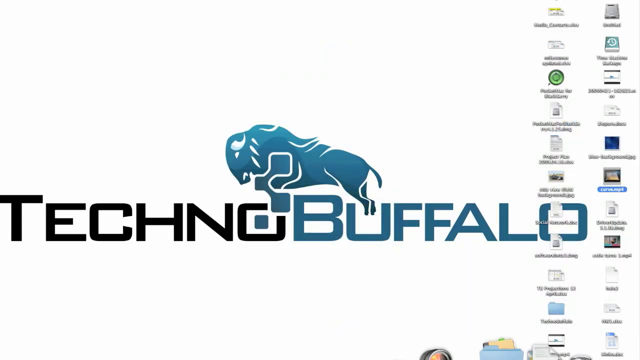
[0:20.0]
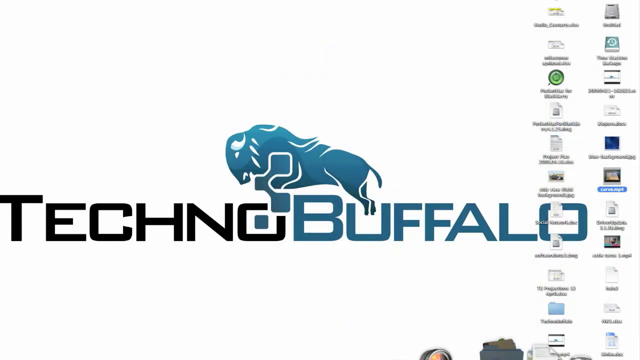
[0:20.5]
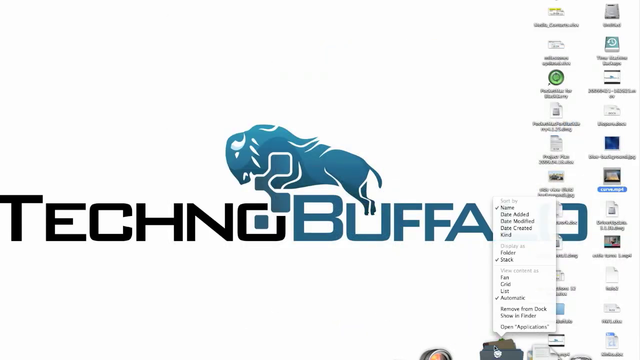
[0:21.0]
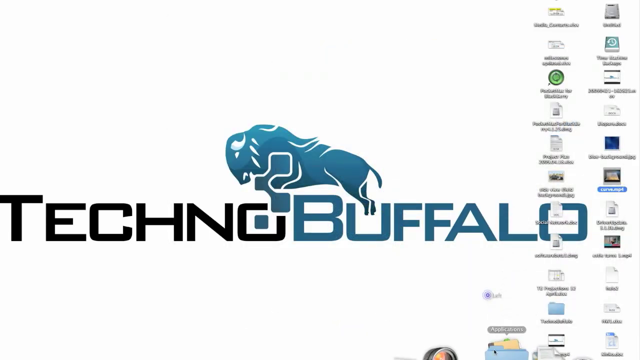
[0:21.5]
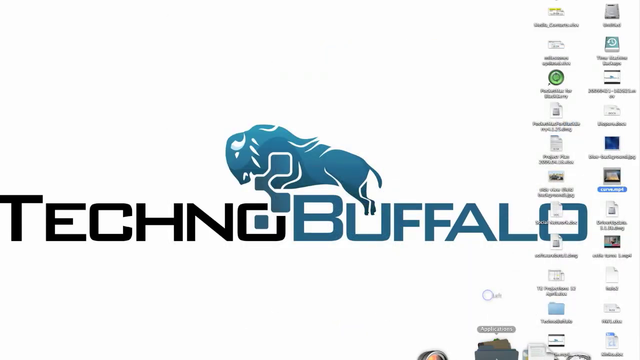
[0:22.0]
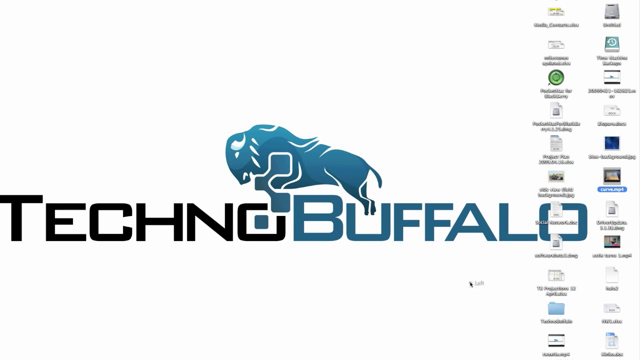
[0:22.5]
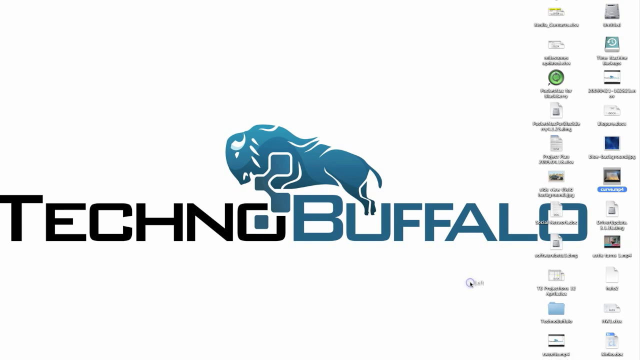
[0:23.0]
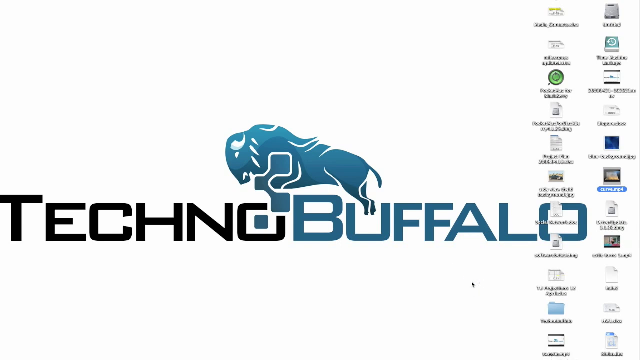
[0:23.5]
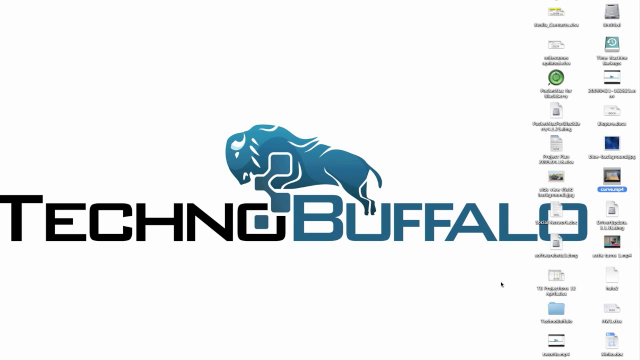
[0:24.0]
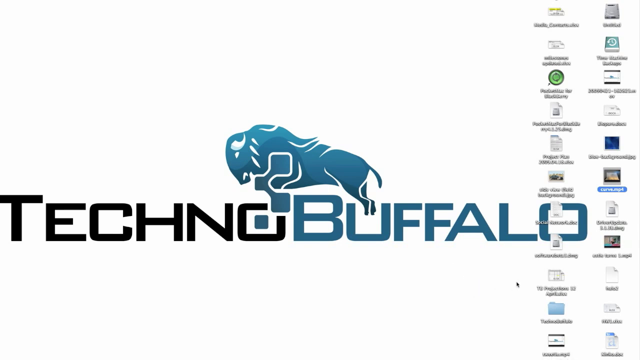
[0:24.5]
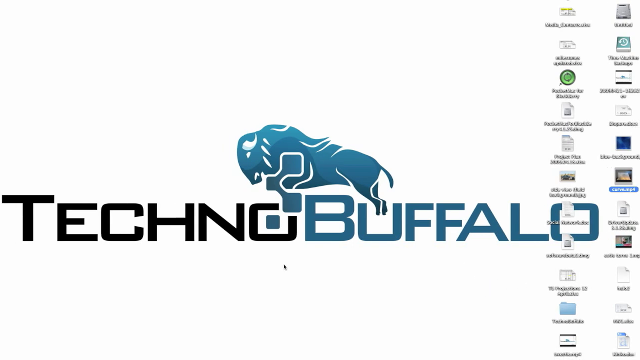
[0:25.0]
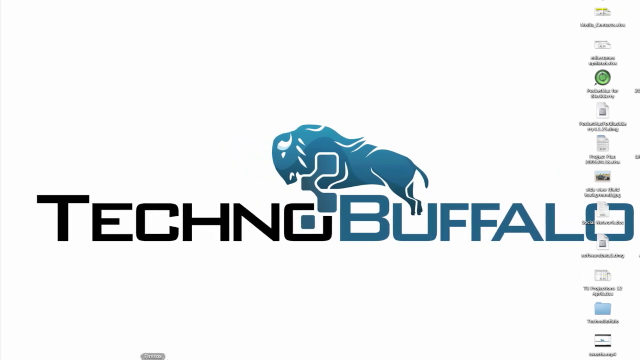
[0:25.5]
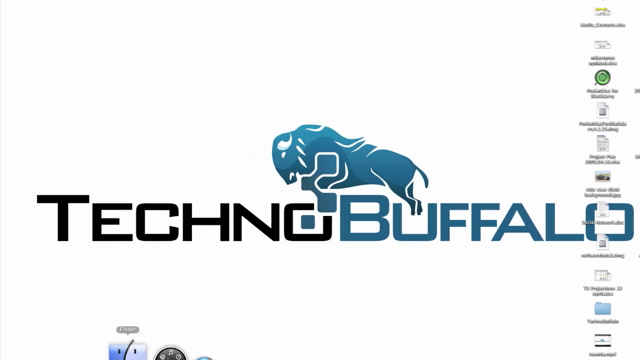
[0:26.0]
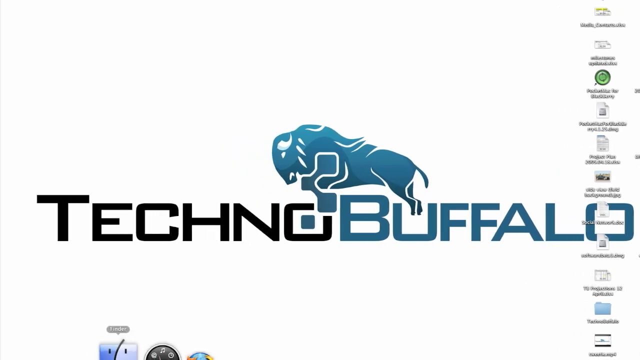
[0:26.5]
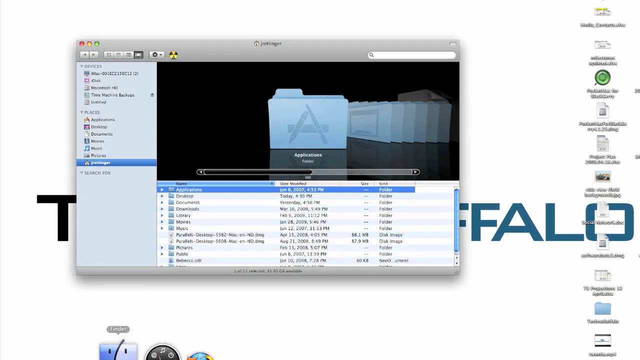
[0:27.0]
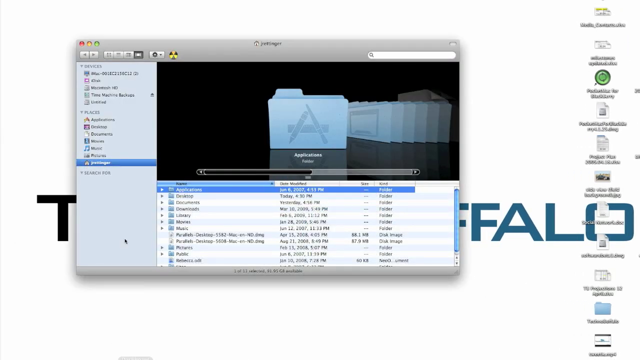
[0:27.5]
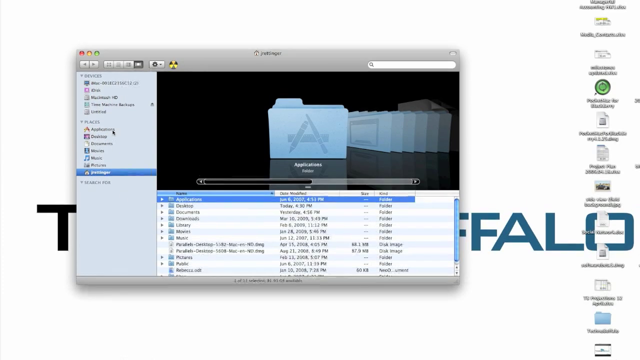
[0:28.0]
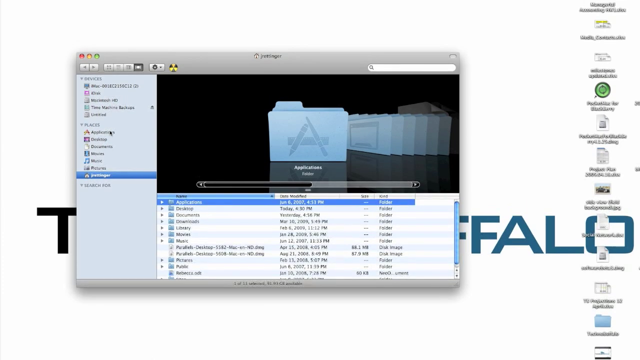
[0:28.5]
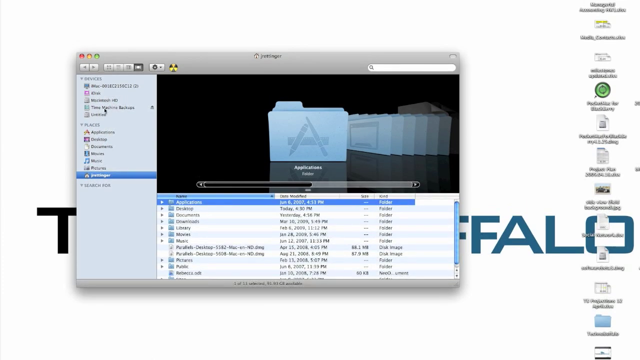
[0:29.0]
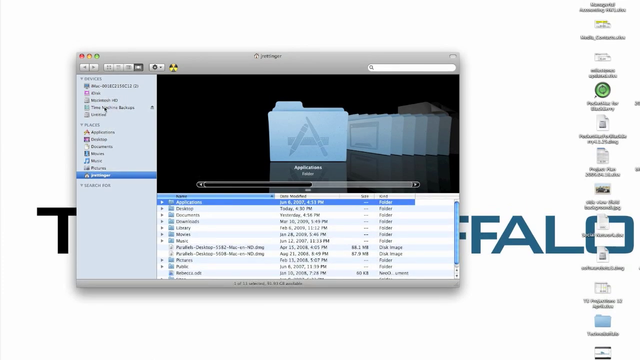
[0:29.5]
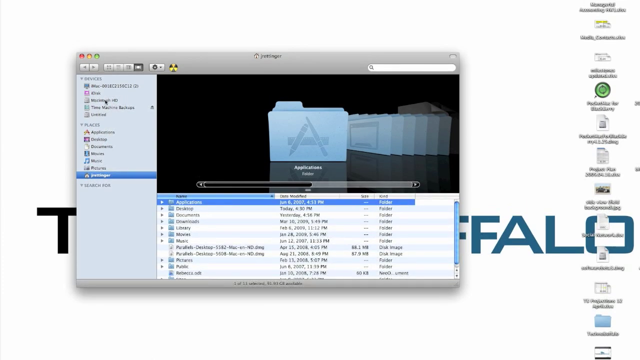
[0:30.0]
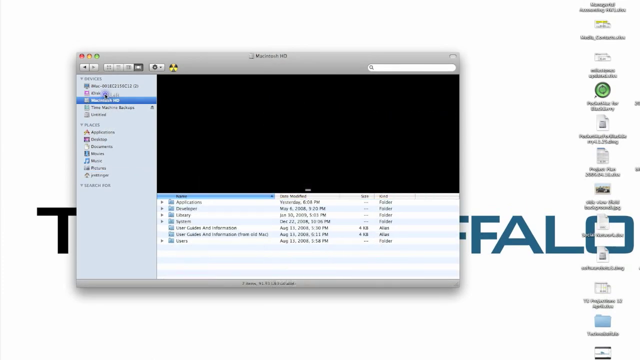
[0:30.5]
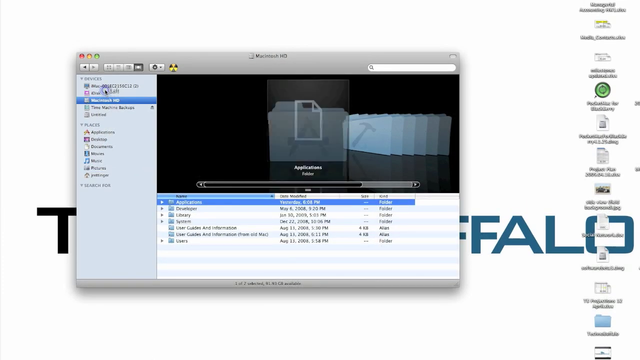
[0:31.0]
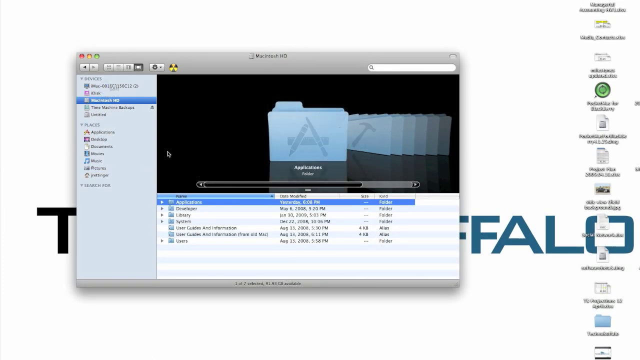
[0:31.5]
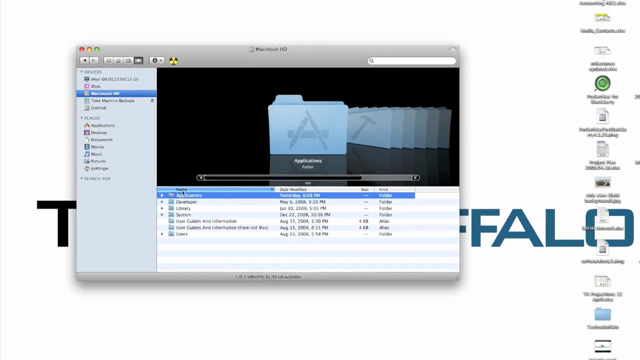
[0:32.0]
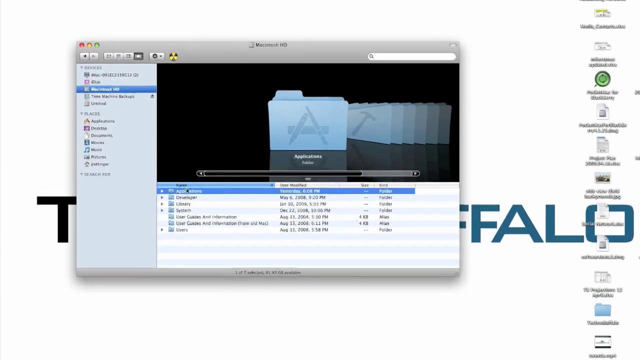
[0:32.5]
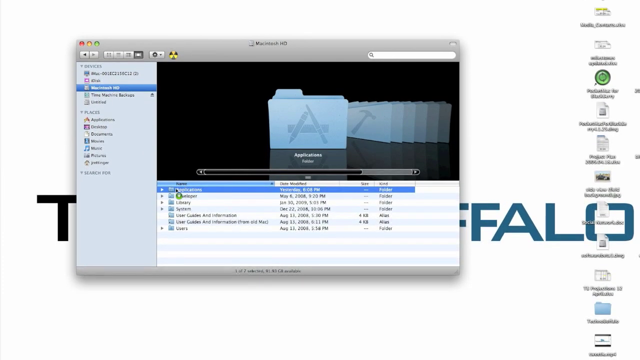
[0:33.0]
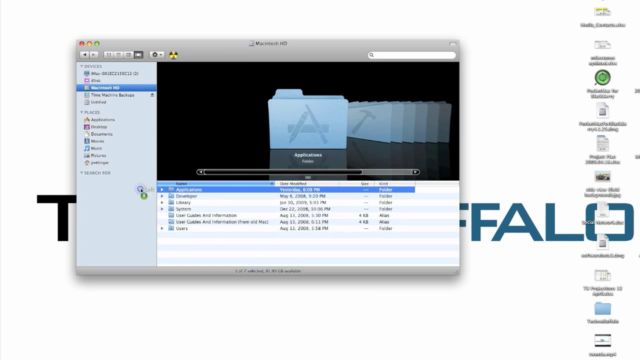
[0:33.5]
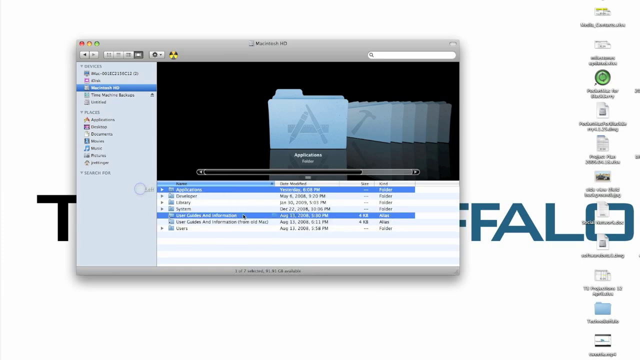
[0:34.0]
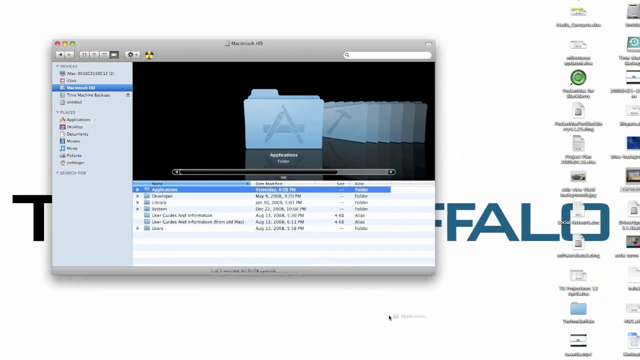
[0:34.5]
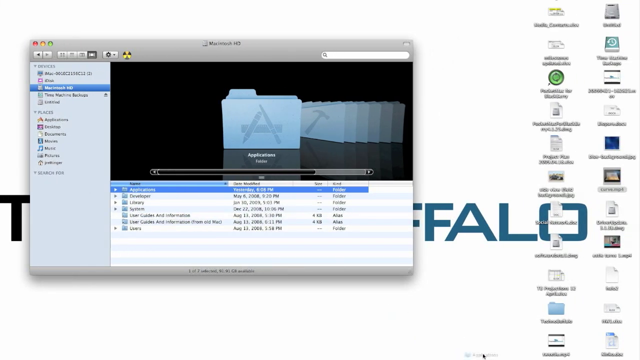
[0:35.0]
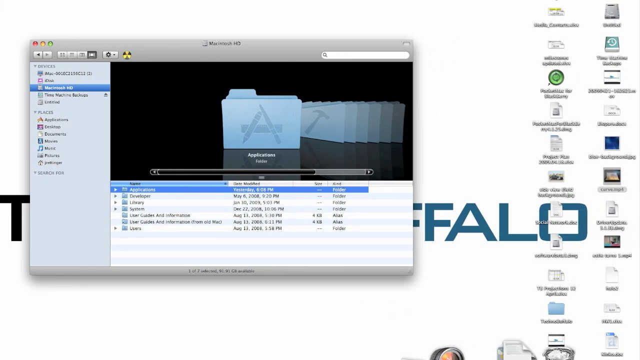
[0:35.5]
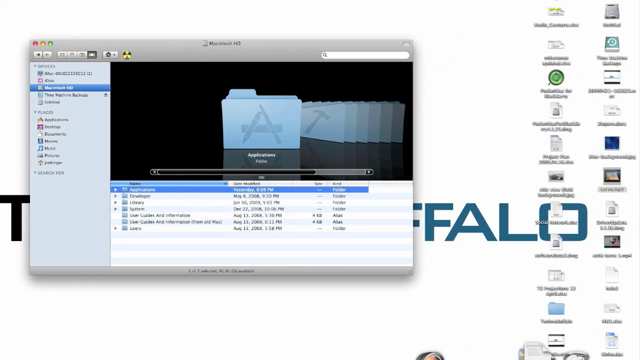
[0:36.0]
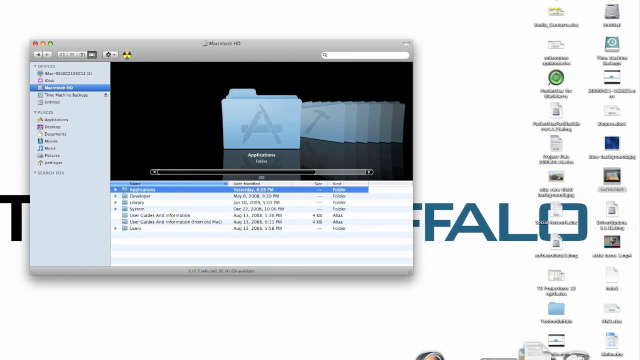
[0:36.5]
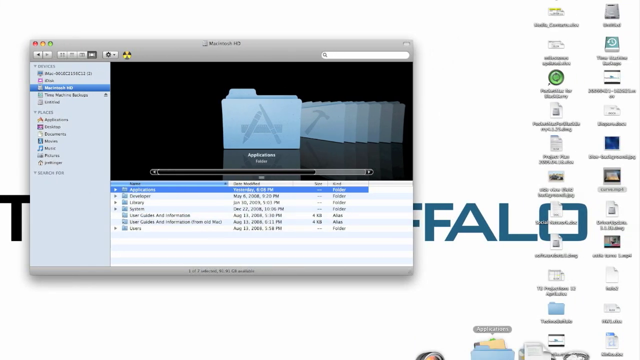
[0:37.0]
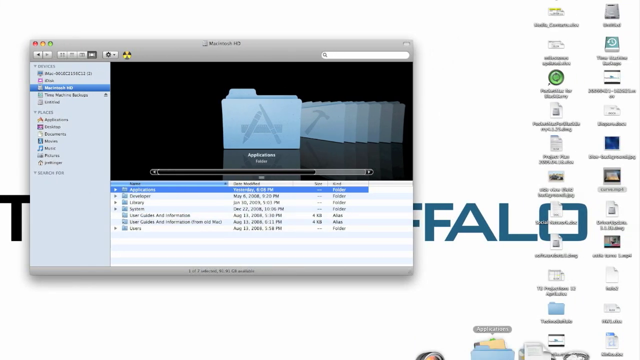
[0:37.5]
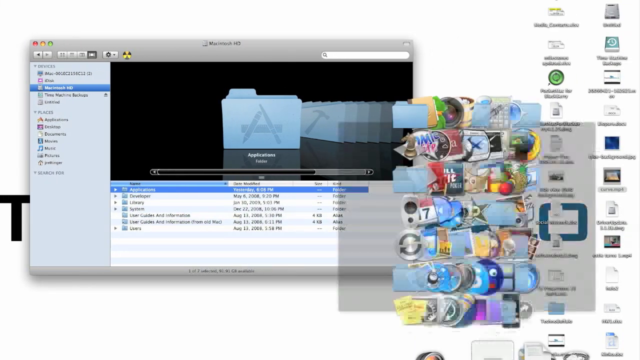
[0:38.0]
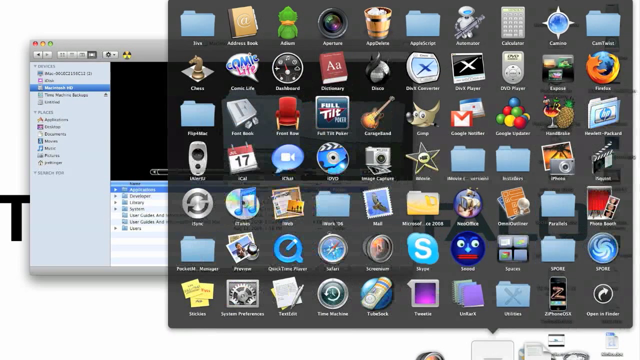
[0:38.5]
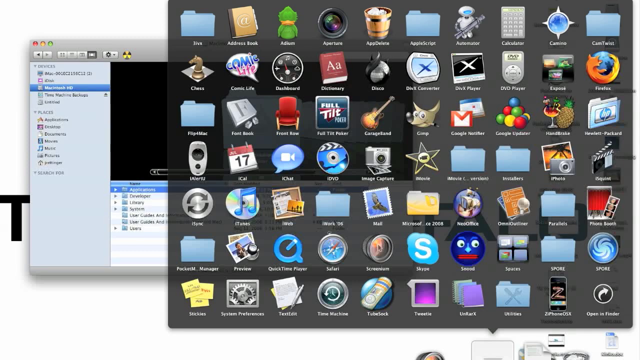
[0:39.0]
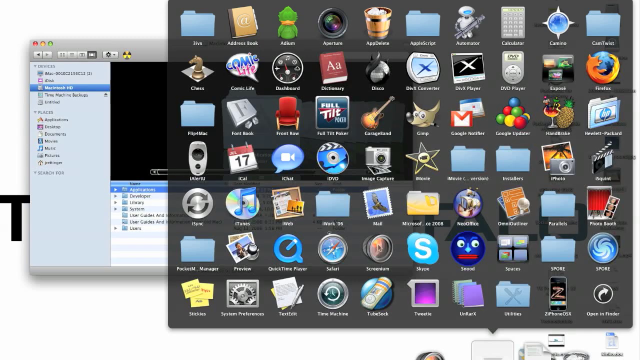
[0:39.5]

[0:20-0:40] The Techno Buffalo logo and picture are shown. The person drags things around on the laptop screen they are recording and pulls up other folders, including the window full of many unfamiliar folders or apps. Another folder pops up, the person selects different tabs in it, and the window with the many folders is shown again.